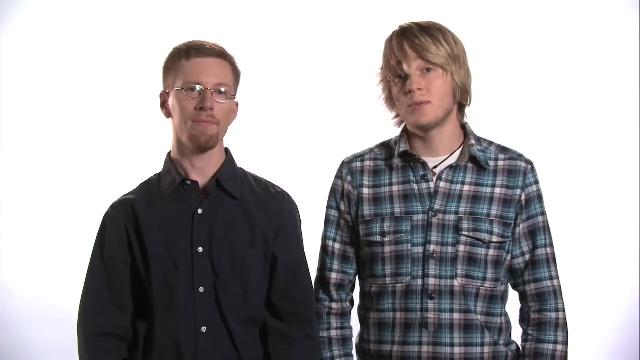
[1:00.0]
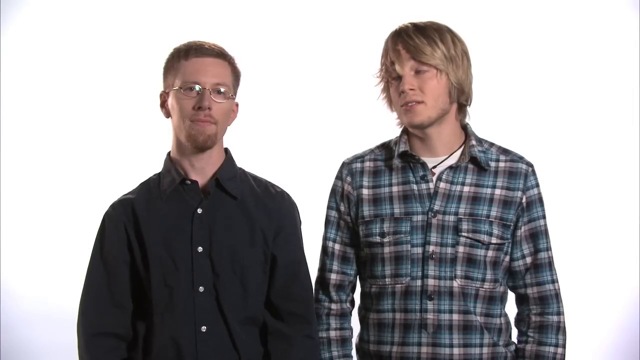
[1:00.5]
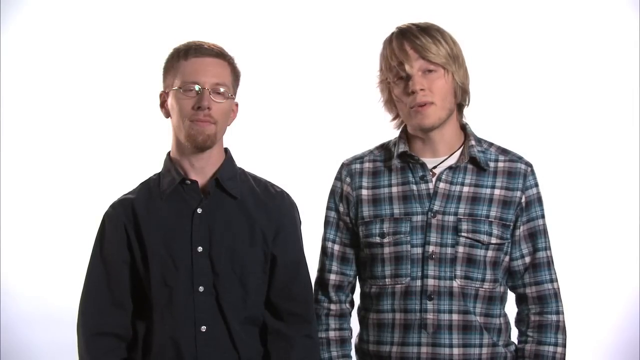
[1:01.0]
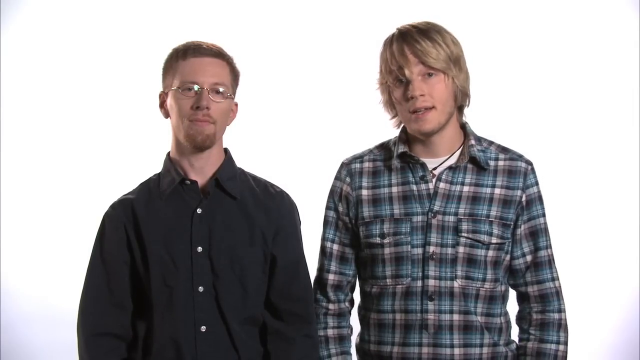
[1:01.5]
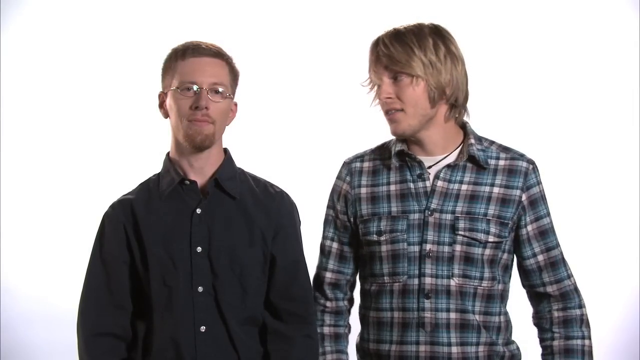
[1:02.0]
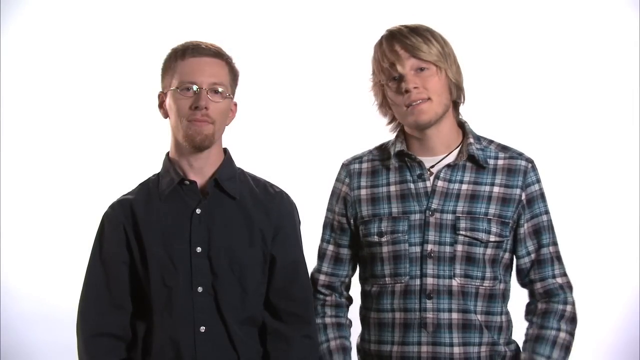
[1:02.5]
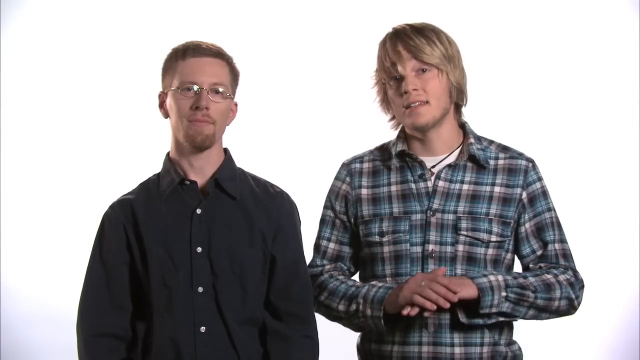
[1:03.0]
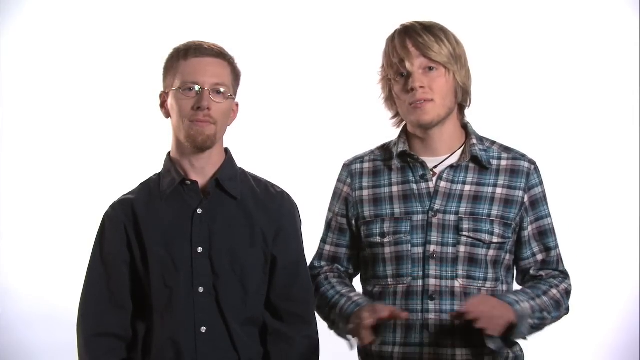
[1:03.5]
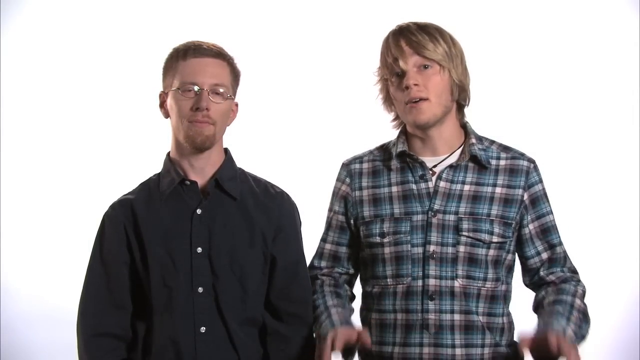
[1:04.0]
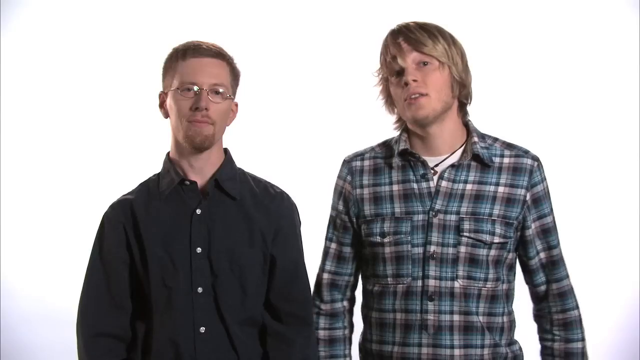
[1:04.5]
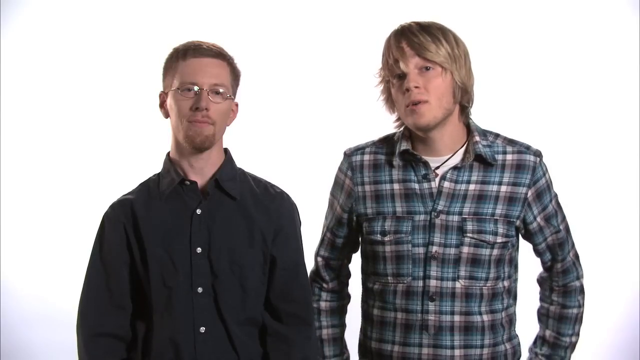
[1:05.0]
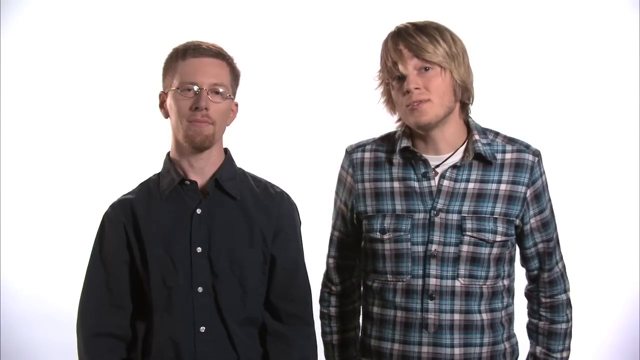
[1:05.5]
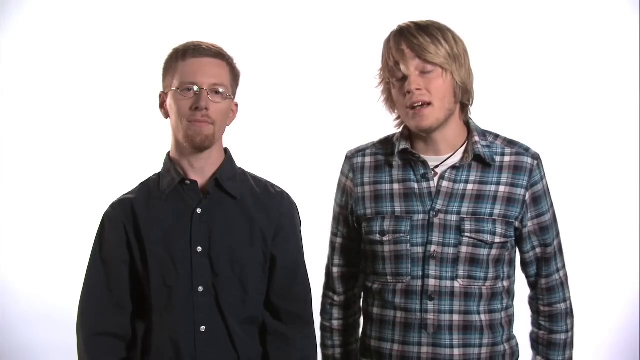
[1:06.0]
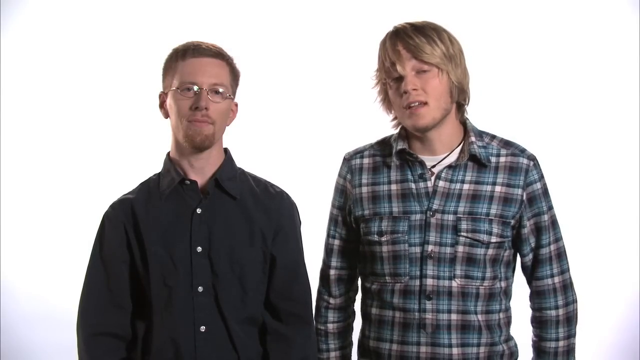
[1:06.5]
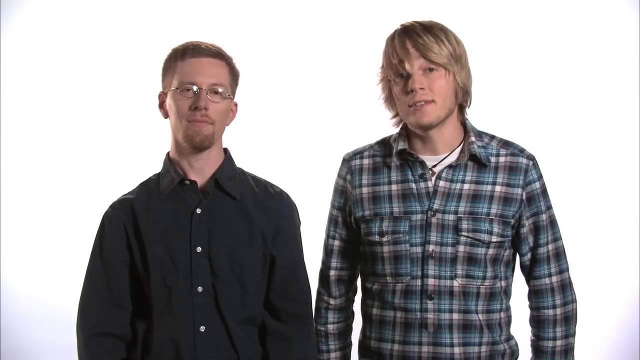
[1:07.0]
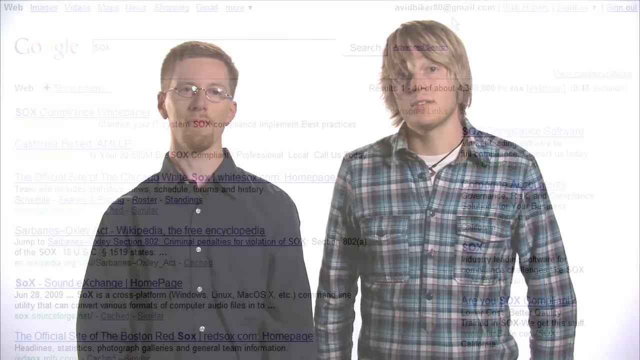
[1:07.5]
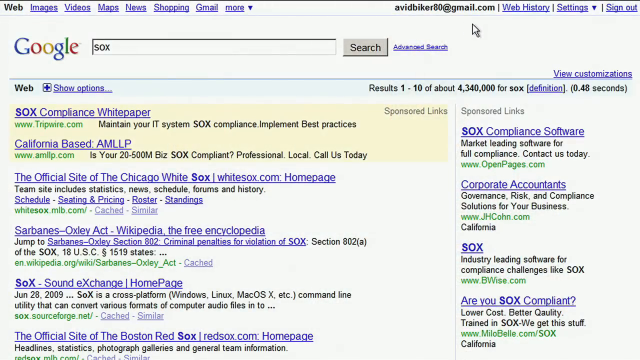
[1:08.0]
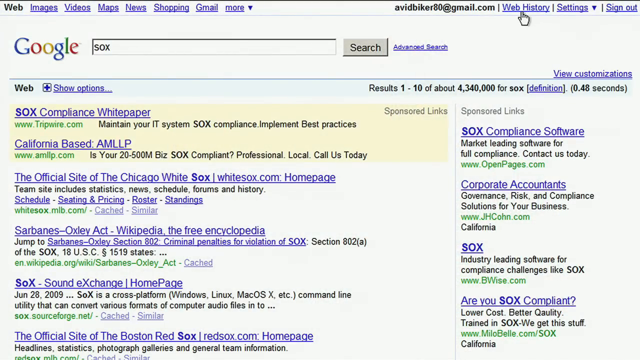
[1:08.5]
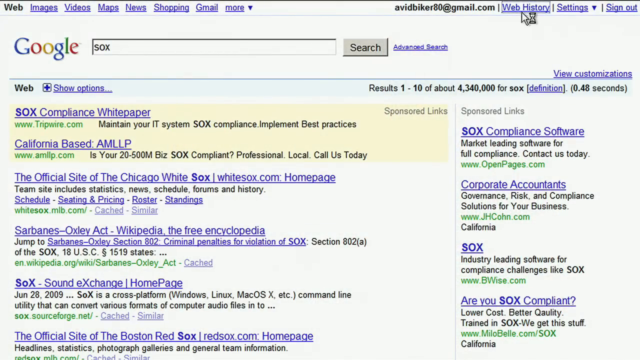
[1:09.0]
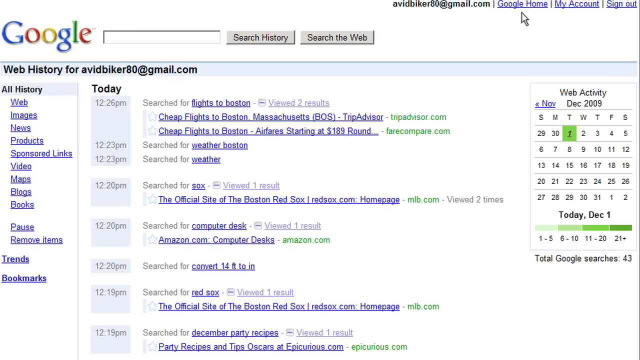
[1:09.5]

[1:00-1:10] Robbie talks and glances over at Brian; his left arm jerks. He turns his head slightly to the right, his arms go out to the sides and drop again, and he looks at Brian. He brings his arms up, right over left, pushes them down and separates them as his head tilts back slightly at an angle, swings his arms out a bit, brings them back together, drops them, and gives a little head shake. Then the search results page for "SOX" appears with the cursor under "Web History"; it clicks, turns into a hand, an hourglass appears, and the Web History page for the email account returns, showing today, the dates and the items searched for. On the right side, the calendar is labeled for web activity, with today's date color-coded in green; below it is a scale of ranges from white to dark green indicating how many searches were made per day. The middle of the page lists all the searches made that day.